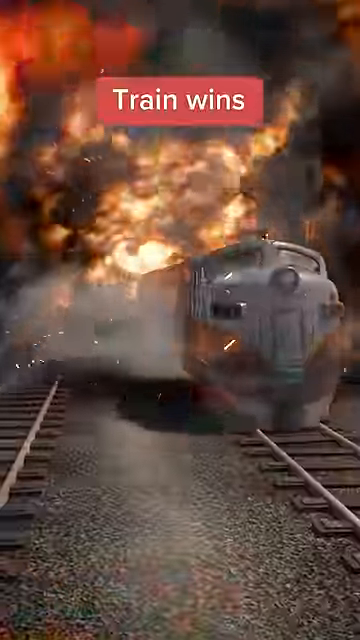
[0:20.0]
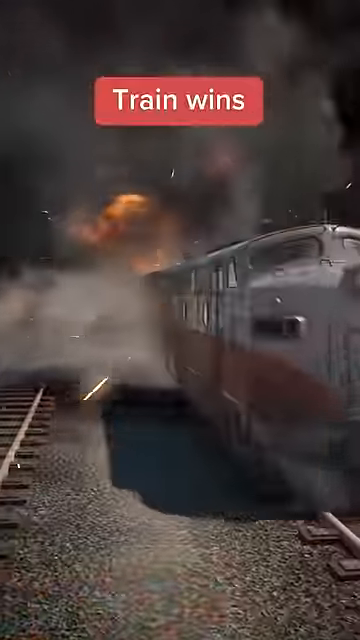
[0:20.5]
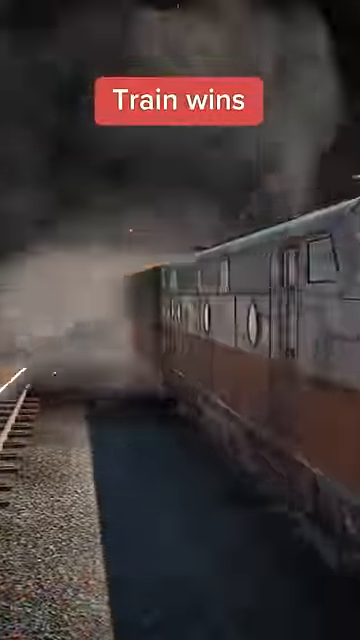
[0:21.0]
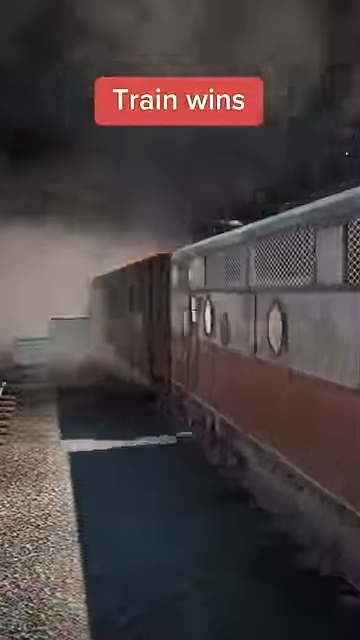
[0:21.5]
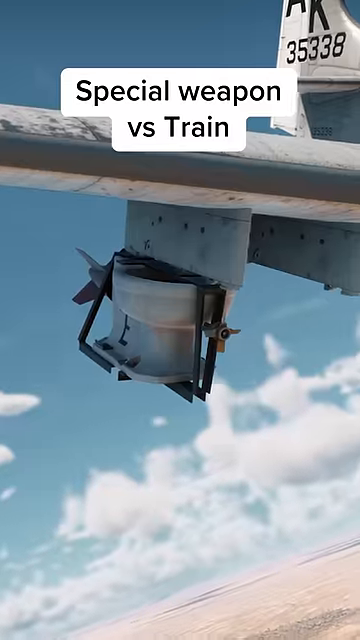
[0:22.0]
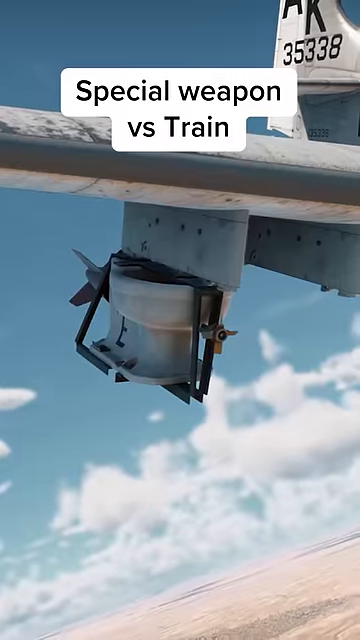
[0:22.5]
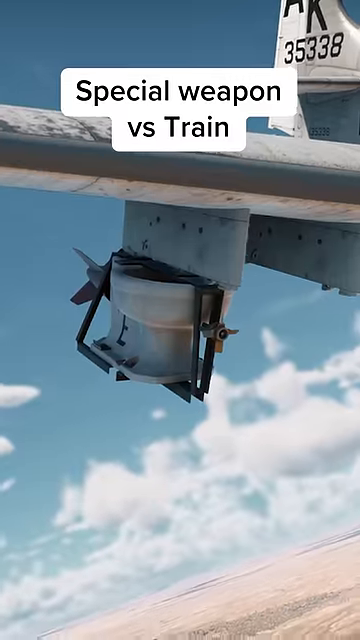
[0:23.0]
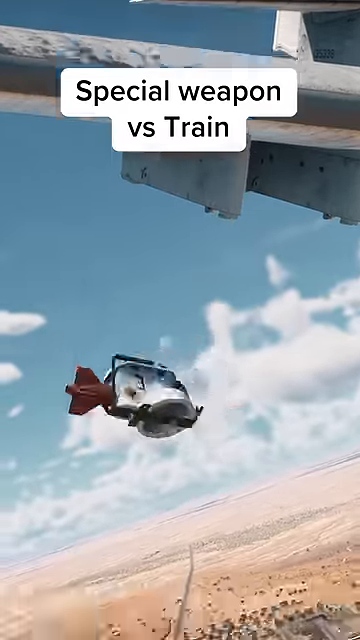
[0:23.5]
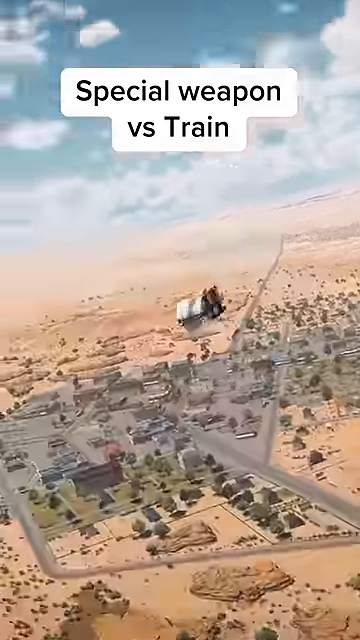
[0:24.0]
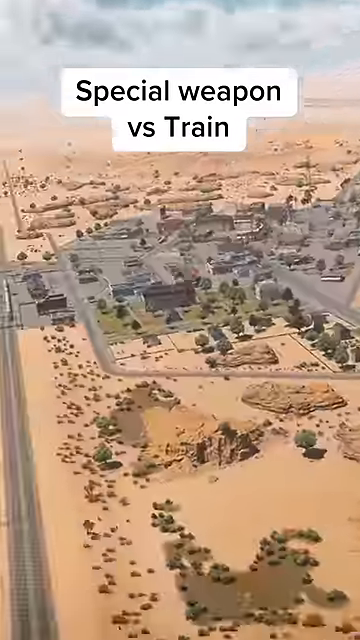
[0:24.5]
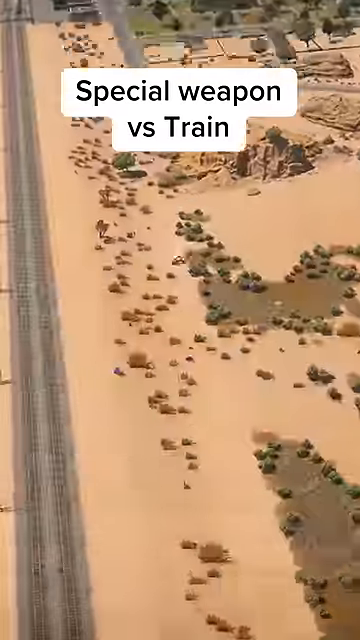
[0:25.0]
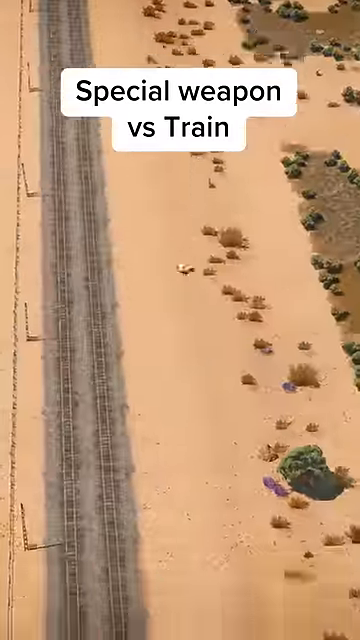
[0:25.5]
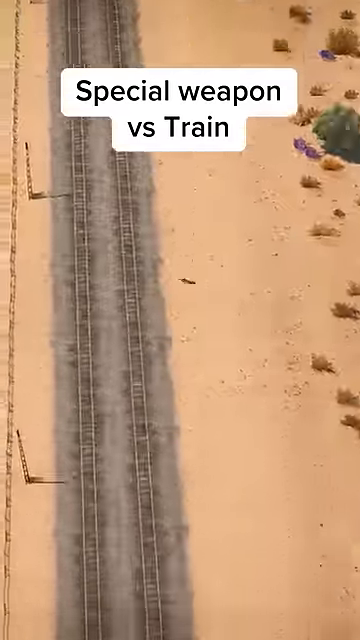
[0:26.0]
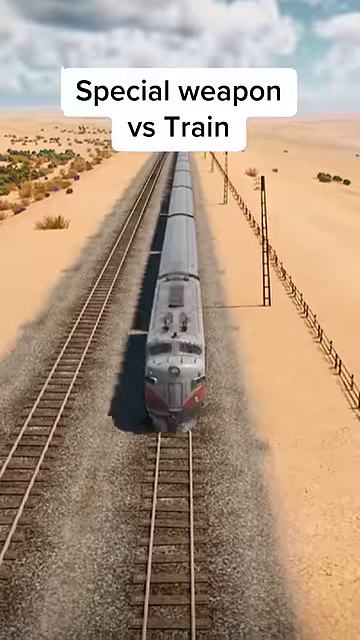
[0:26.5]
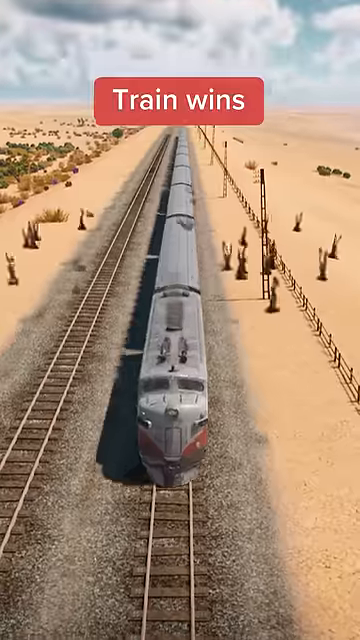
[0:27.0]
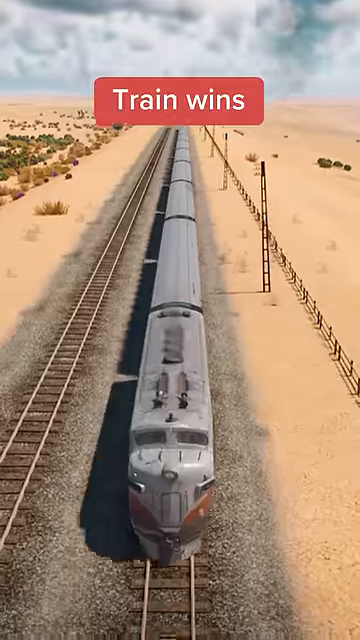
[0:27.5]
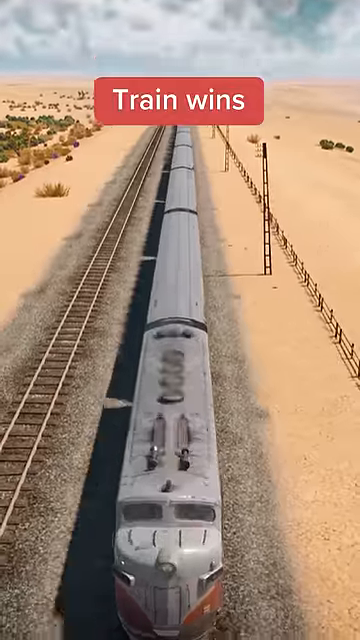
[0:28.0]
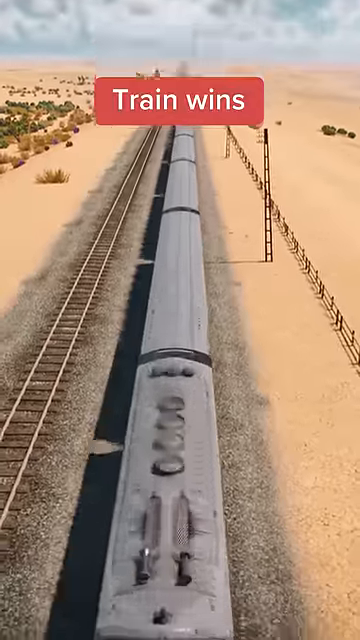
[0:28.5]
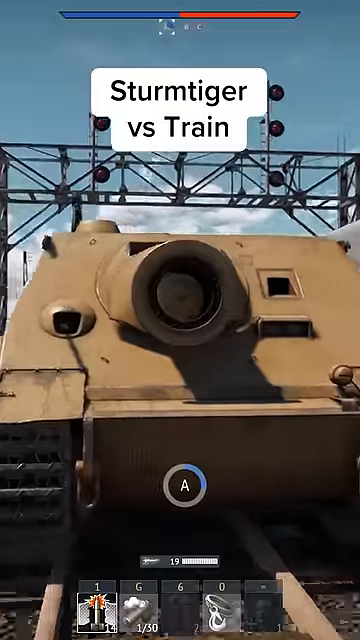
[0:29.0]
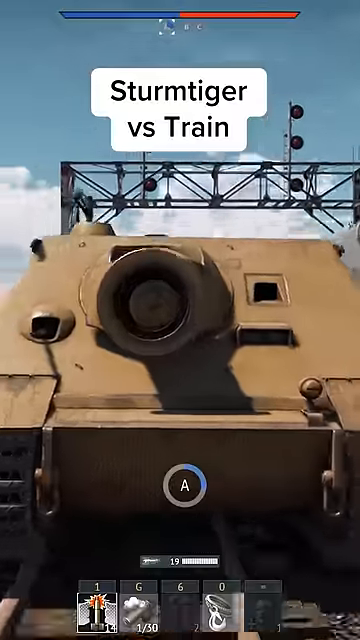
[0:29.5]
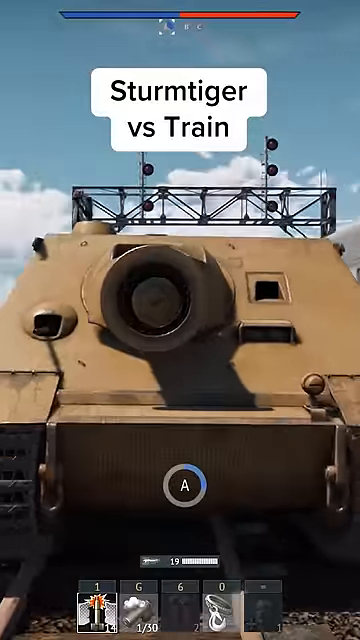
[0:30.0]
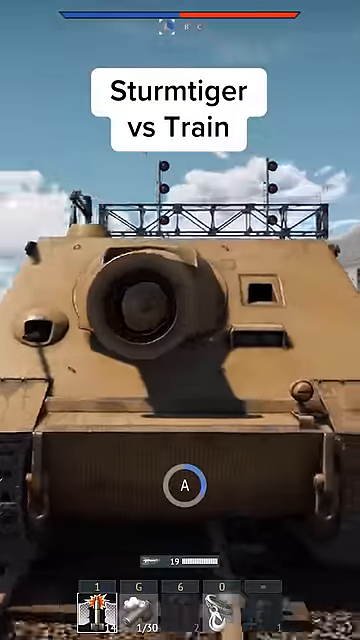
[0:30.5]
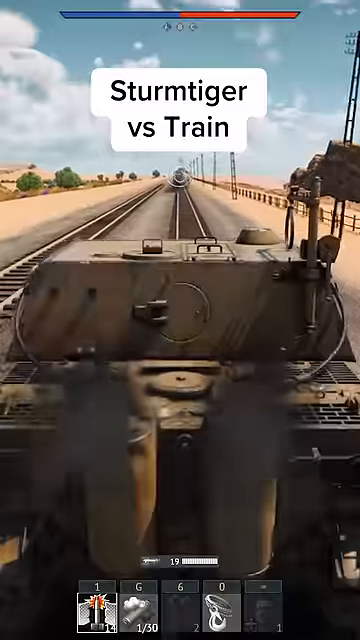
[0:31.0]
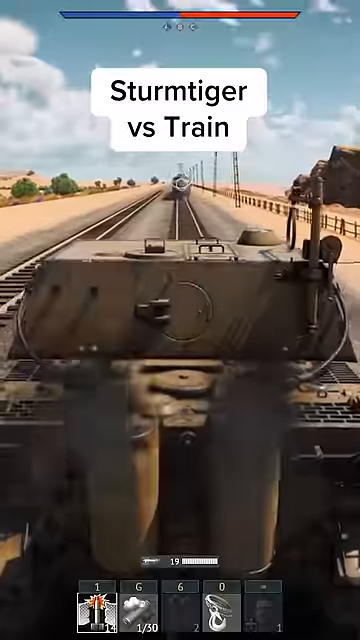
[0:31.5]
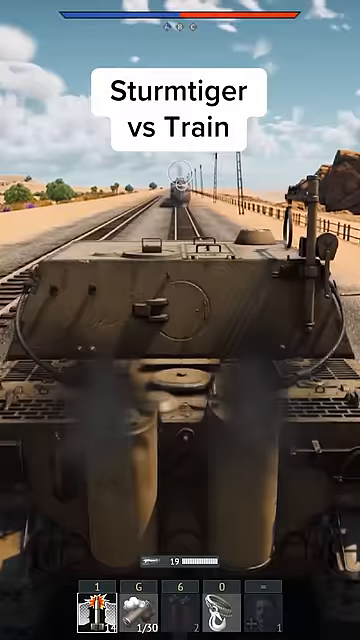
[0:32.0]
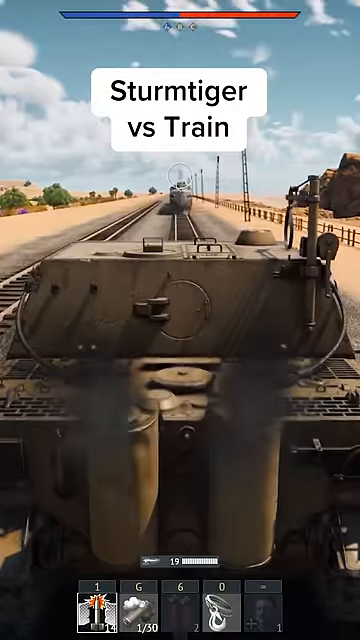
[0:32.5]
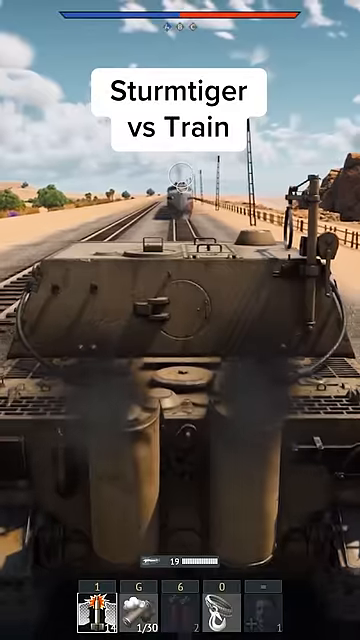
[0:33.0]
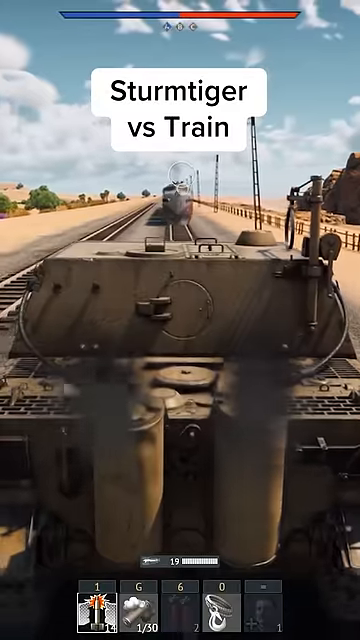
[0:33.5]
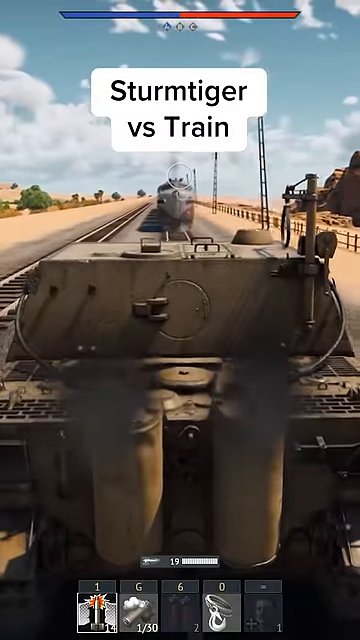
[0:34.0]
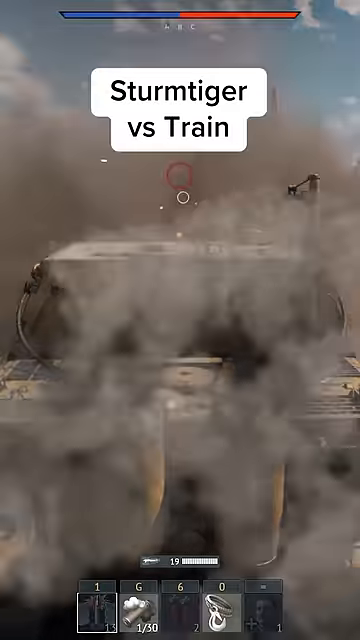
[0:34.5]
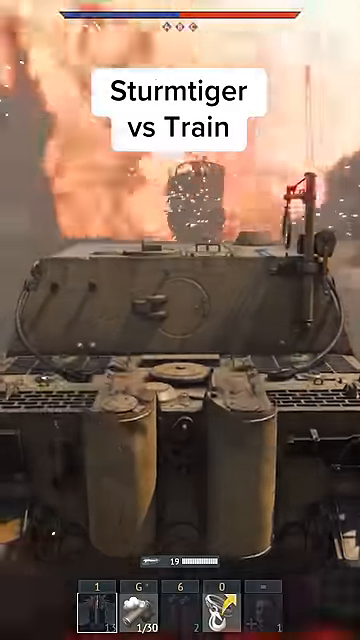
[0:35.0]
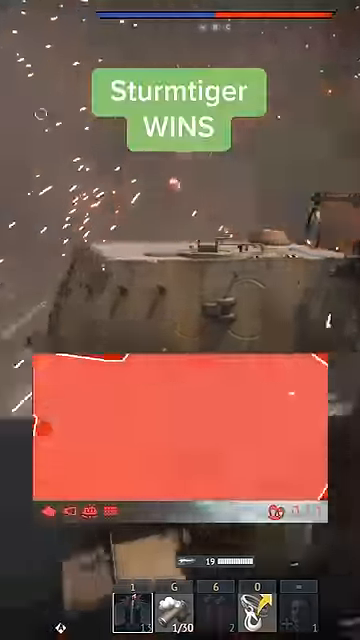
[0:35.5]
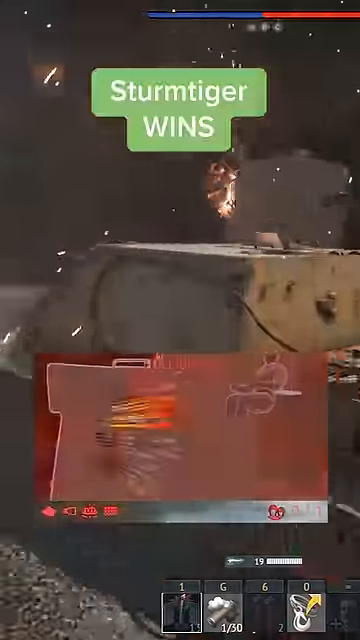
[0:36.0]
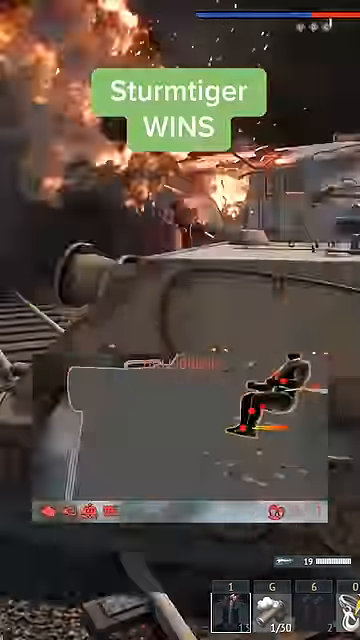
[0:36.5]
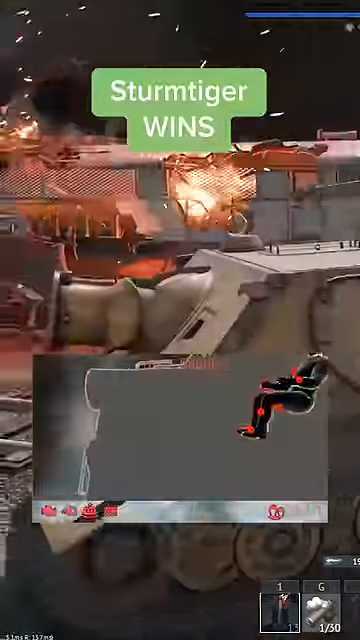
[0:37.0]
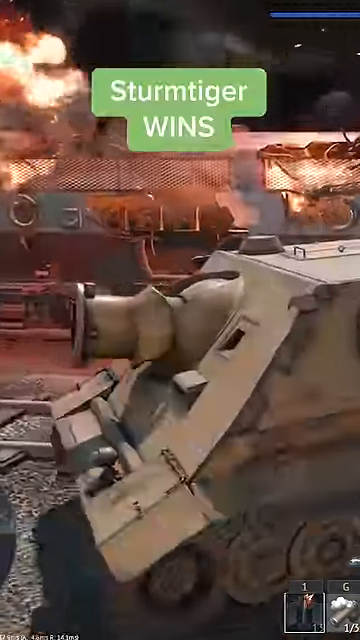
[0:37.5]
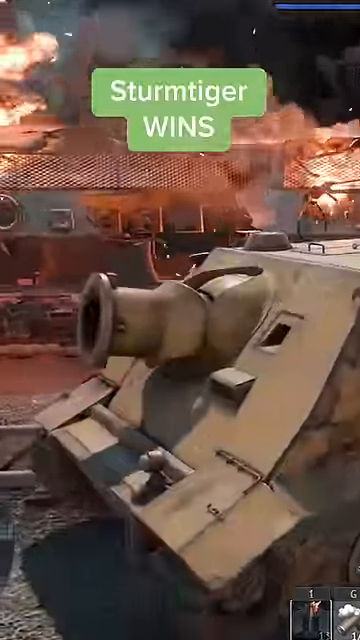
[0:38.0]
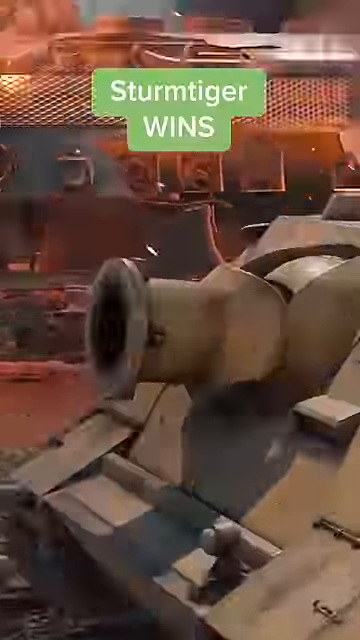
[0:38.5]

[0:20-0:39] The same video game shows aerial combat, with bombs seemingly dropping out of the sky. A tank and a train continue to shoot each other on the tracks, and the tank wins this time. A brown train travels down the train track and shoots a train coming out of it. The environment appears to be a desert. Along the bottom of the screen there seem to be some abilities, possibly showing cooldowns or when the abilities can be used. The game appears to be called War and Thunder.